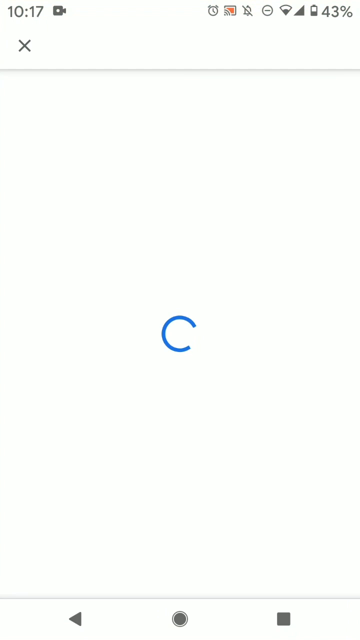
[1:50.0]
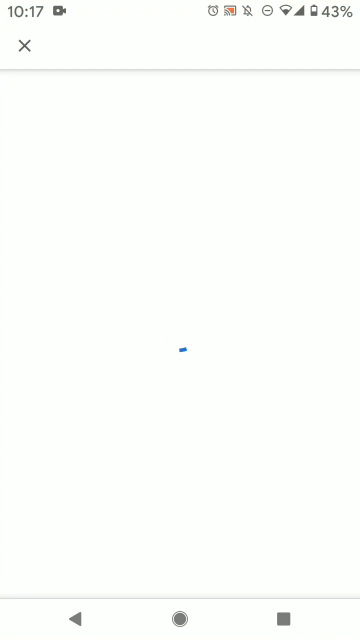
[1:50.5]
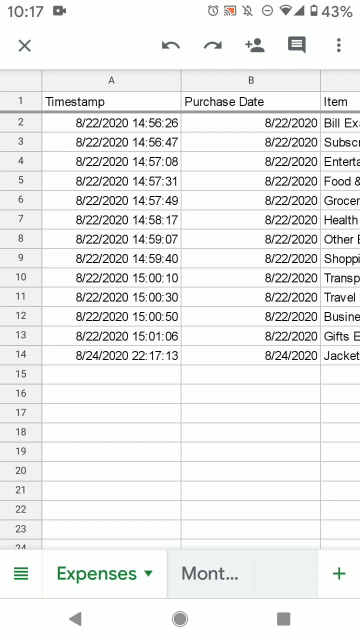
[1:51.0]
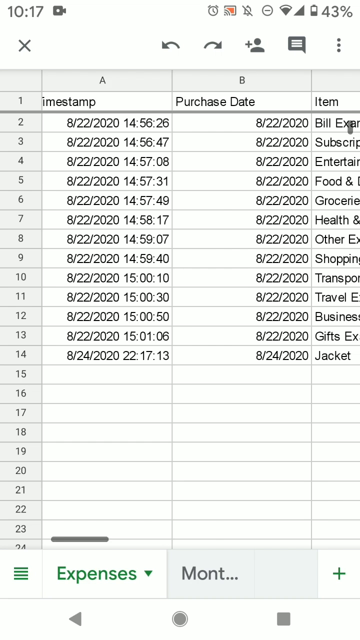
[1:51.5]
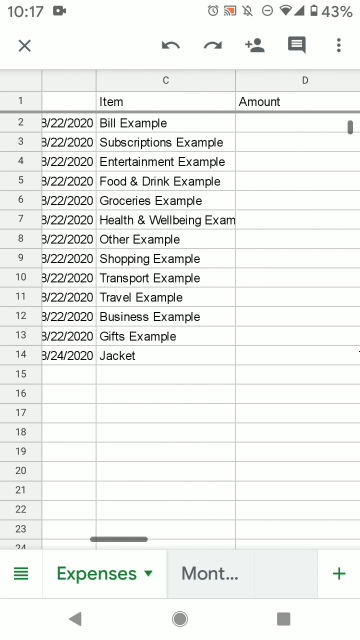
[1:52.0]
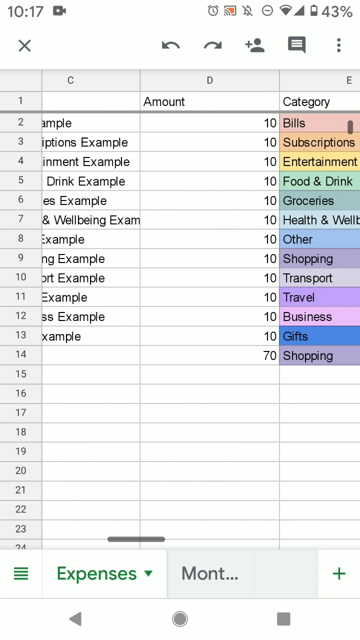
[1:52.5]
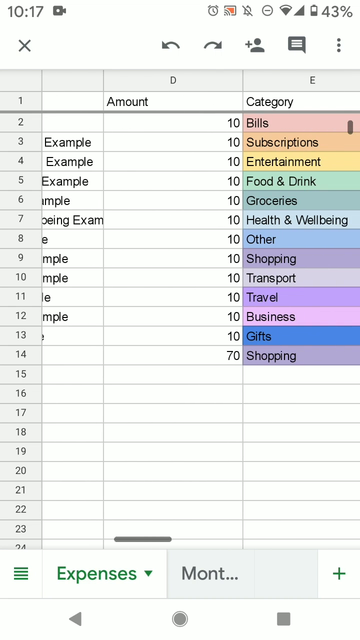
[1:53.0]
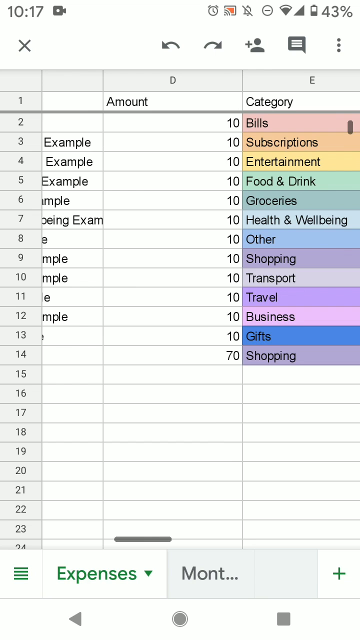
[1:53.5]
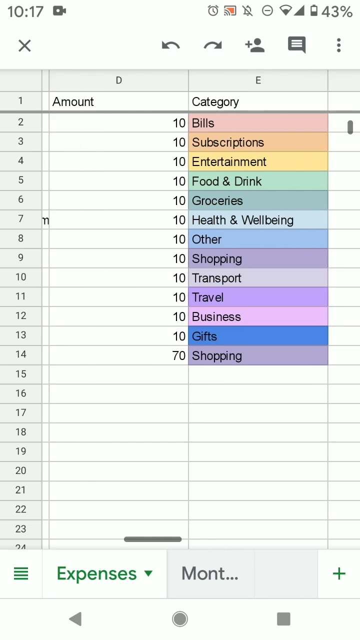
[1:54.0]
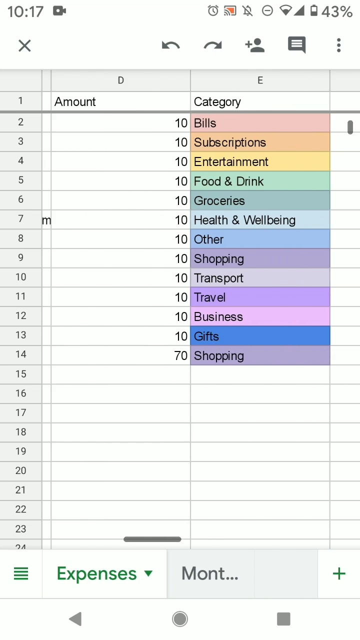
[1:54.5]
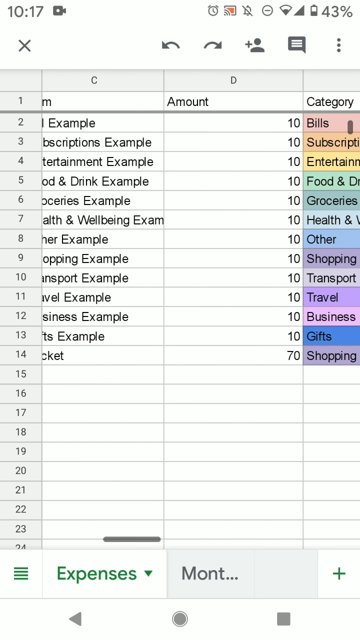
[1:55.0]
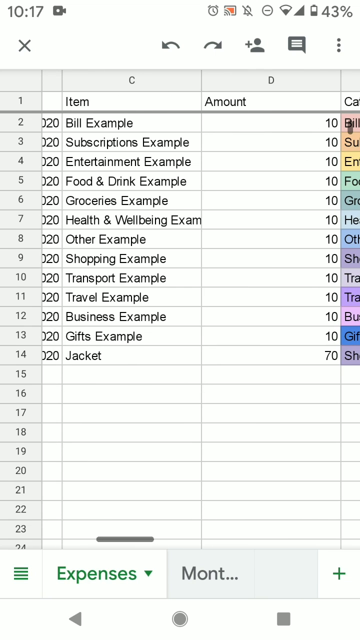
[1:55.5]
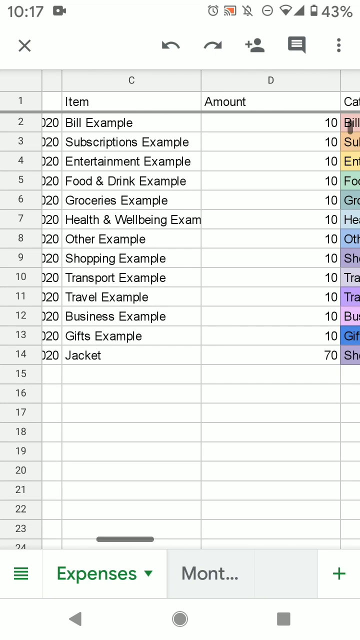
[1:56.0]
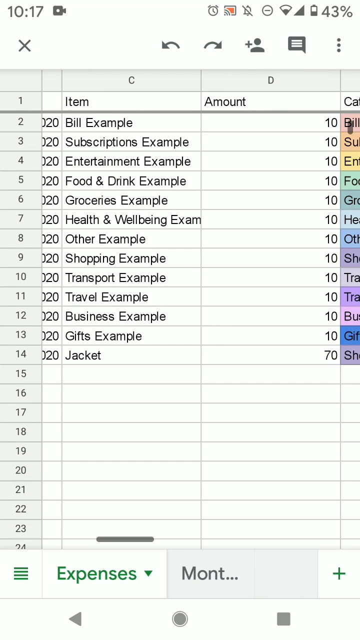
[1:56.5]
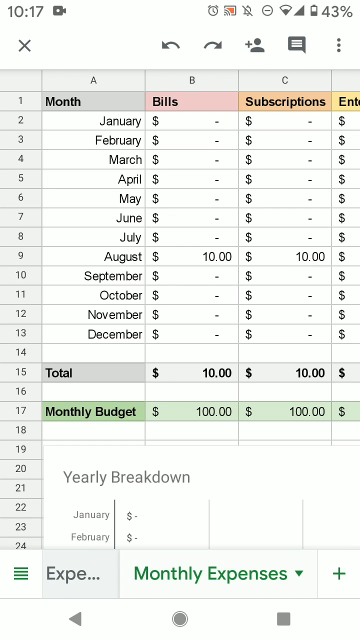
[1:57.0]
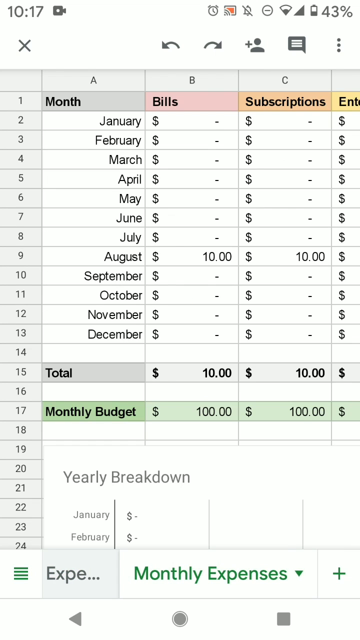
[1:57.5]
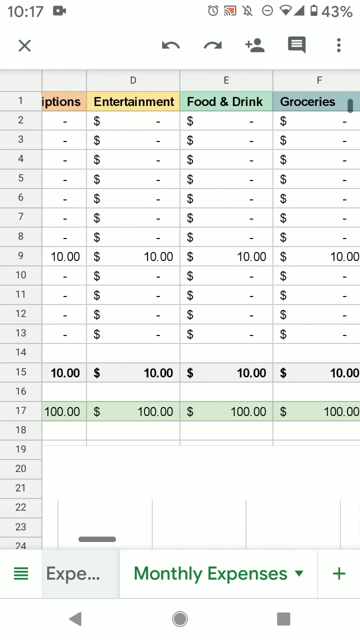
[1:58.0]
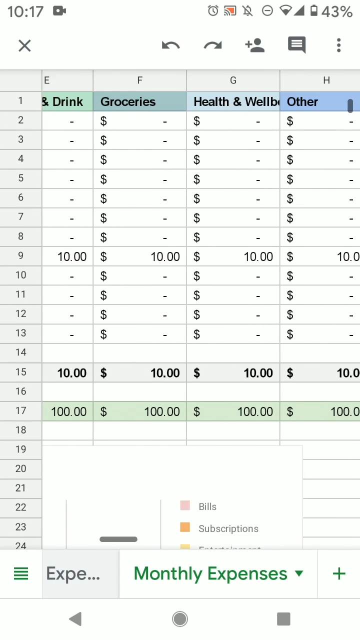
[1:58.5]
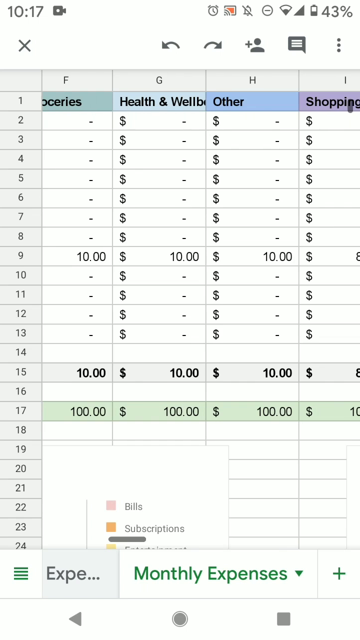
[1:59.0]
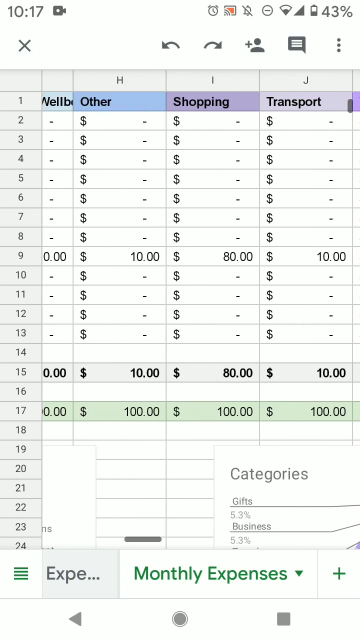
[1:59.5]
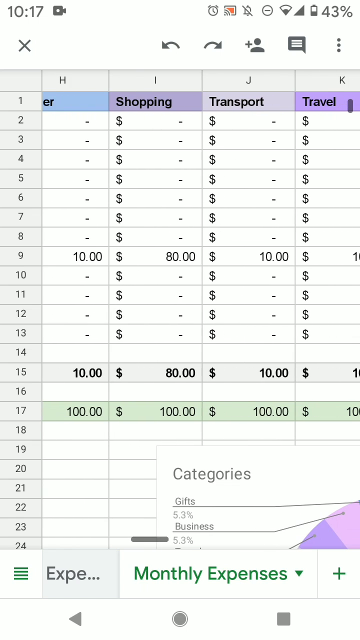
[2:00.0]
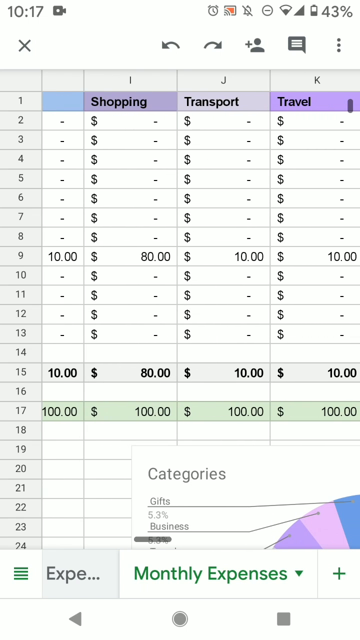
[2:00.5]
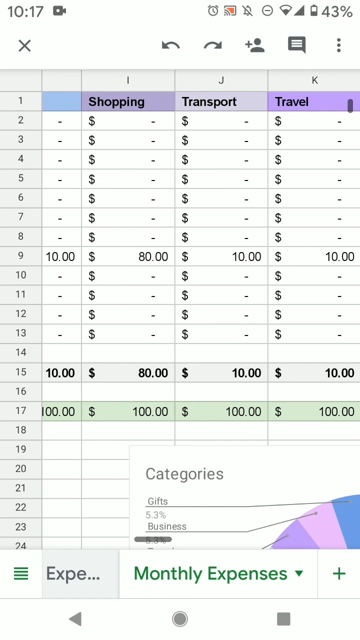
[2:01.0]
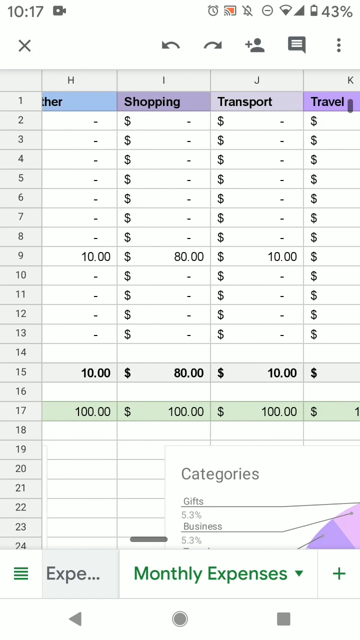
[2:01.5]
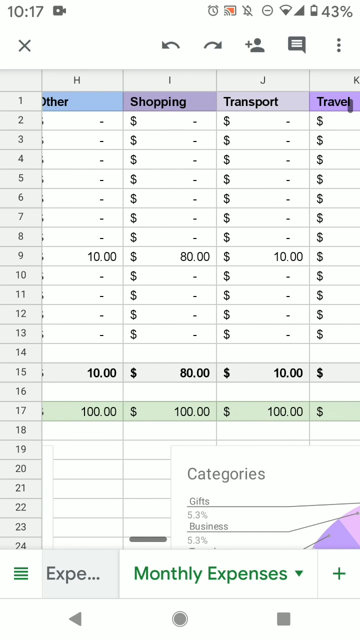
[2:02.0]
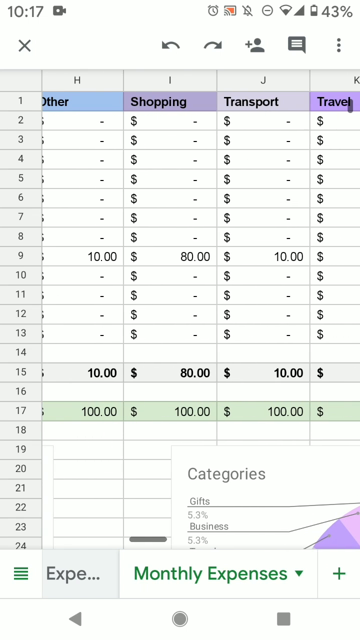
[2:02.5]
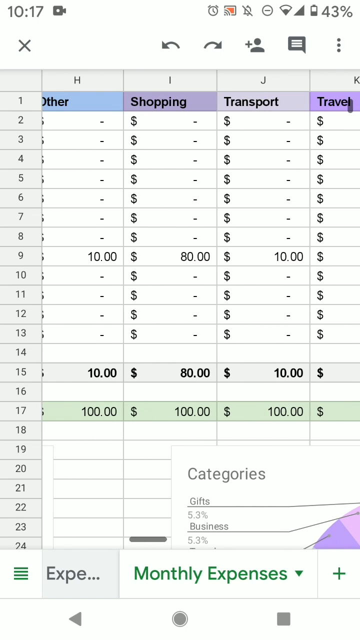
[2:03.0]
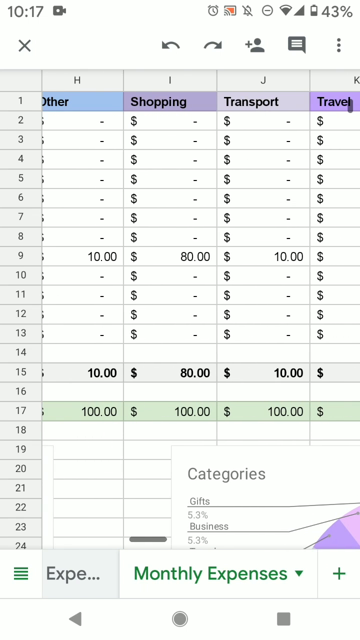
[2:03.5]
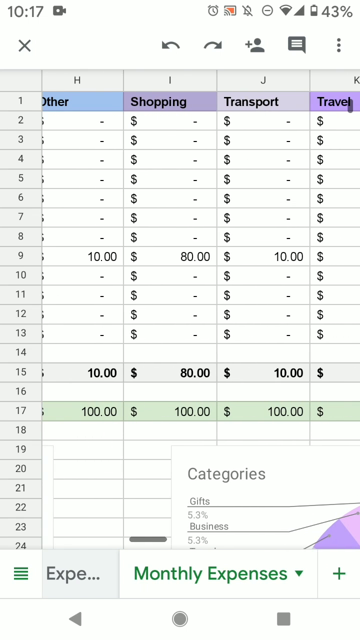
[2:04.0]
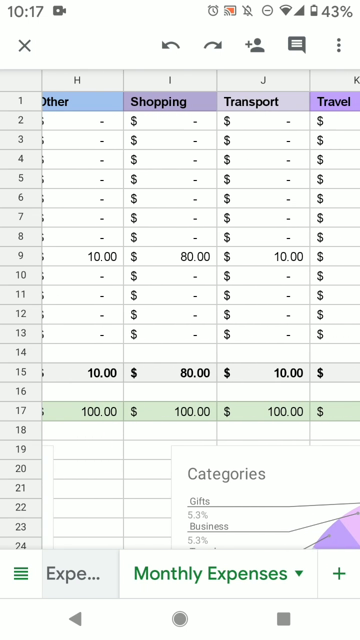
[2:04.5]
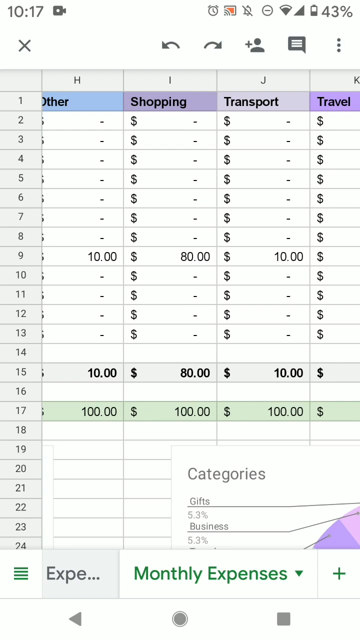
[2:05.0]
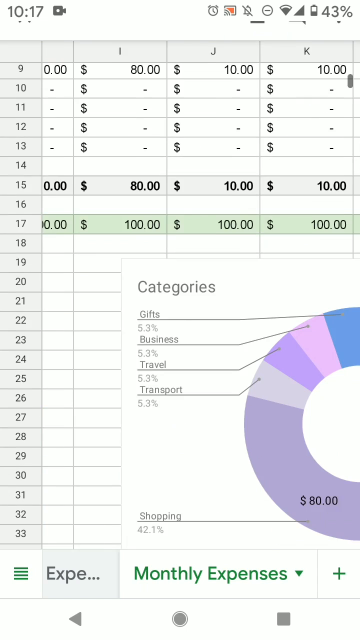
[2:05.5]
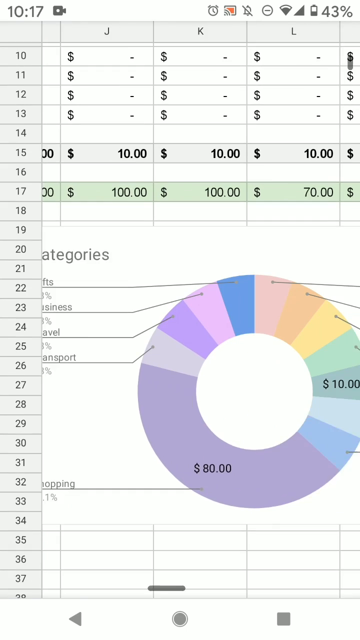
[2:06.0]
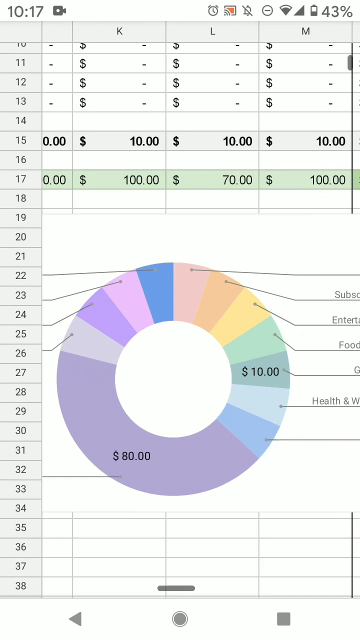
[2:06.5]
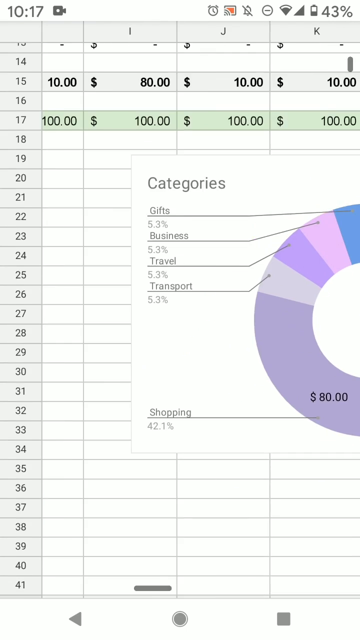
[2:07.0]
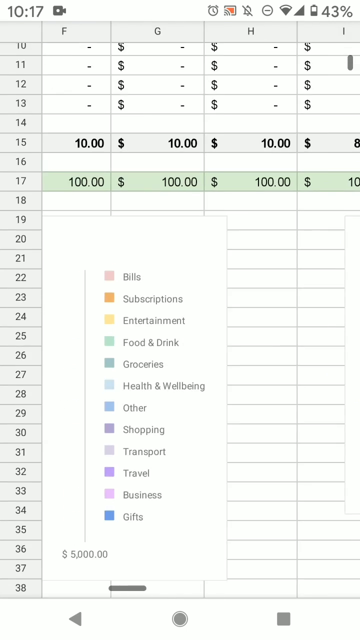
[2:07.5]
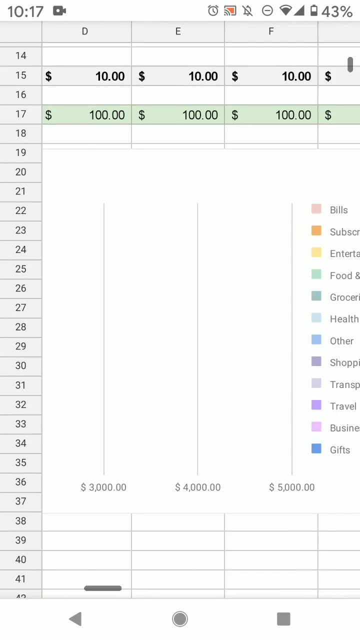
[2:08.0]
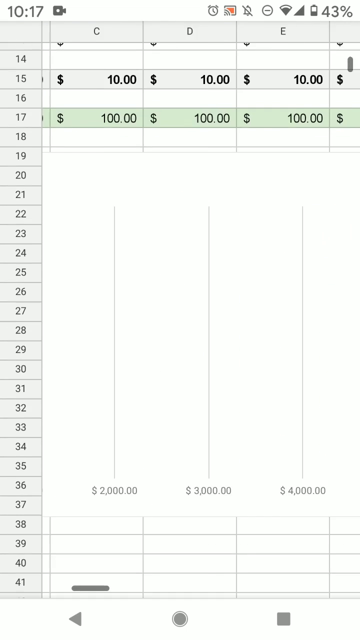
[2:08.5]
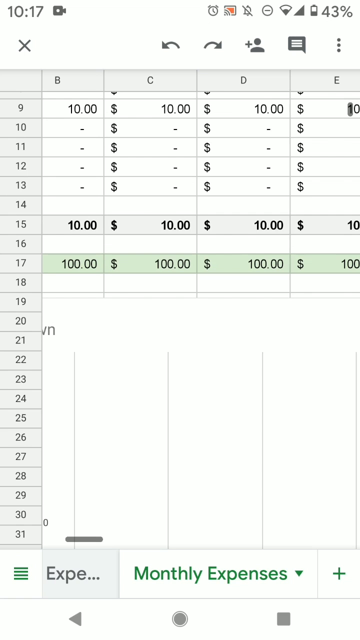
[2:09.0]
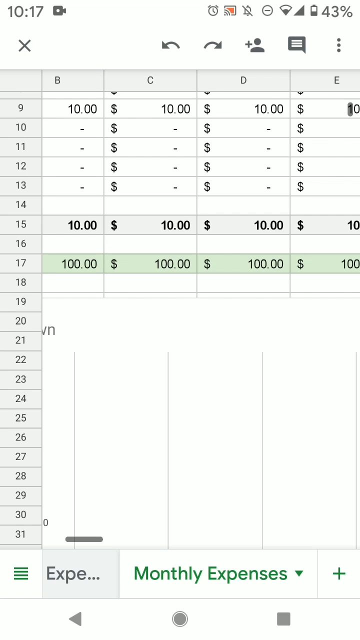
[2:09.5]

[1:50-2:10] A loading icon appears, and the expenses sheet opens. It has multiple columns for timestamp, purchase date, item, amount and category, with the category column in many colors. Categories include bills, subscription, entertainment, food and drink, groceries, health and wellness, other, shopping, transport, travel, business and gifts, and the entries include a subscriptions example, entertainment example, food and drink example, groceries example, health and well-being example, other example, shopping example, transport example, travel example, business example, gift example, and "jacket". The view then moves to another expenses sheet with columns for January through December. Many of the cells are not filled in and show what appear to be dash marks, while only some appear to contain numbers. Scrolling across reveals a pie chart showing different categories filled in different amounts; one category reads 80 dollars and takes up the largest portion, and that category is shopping.